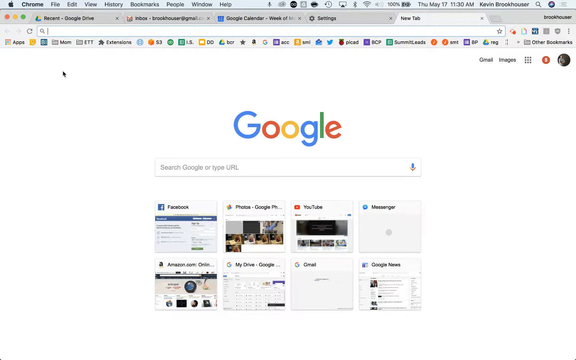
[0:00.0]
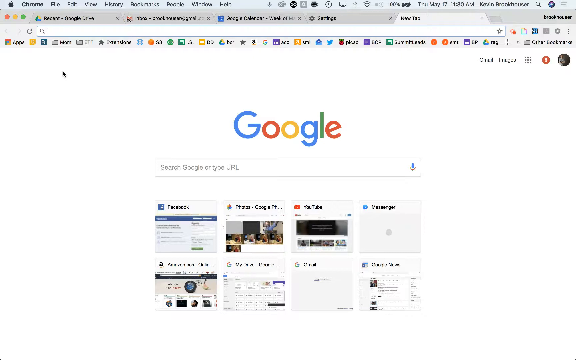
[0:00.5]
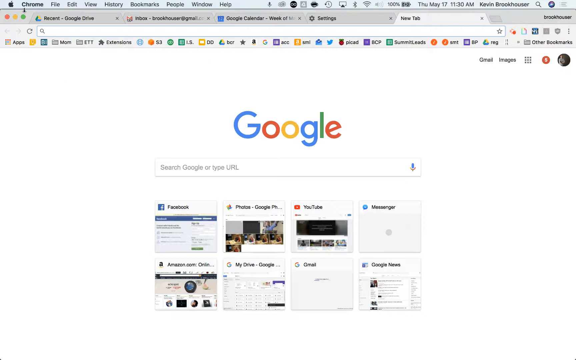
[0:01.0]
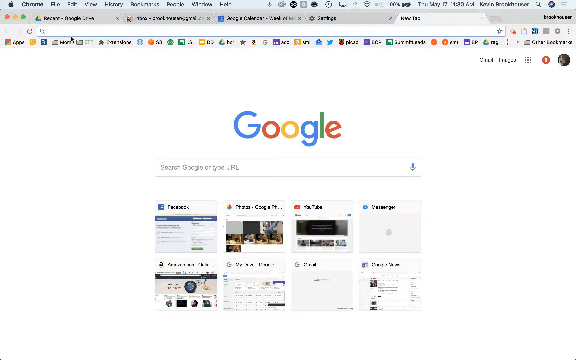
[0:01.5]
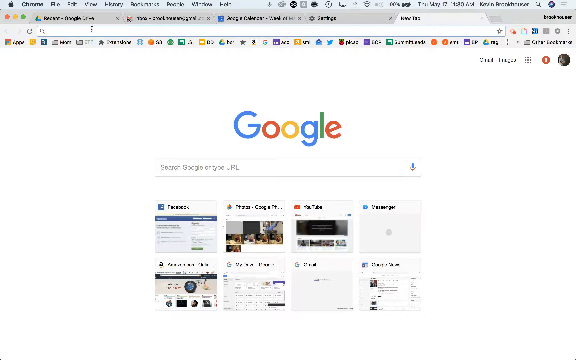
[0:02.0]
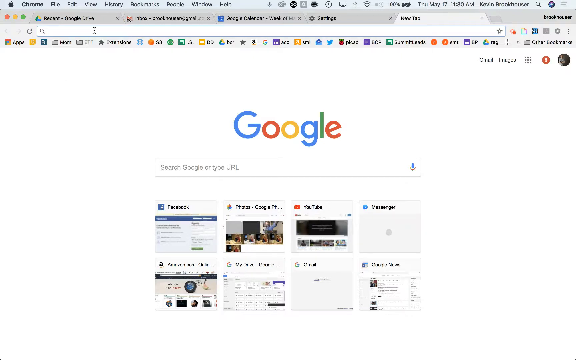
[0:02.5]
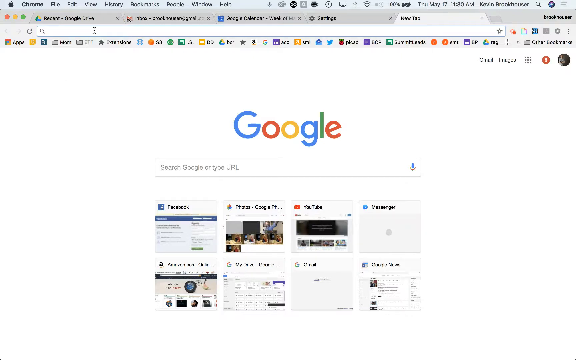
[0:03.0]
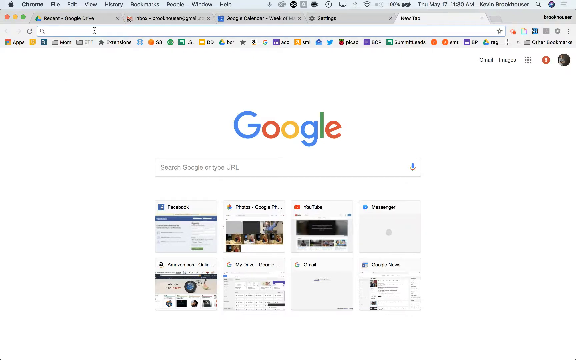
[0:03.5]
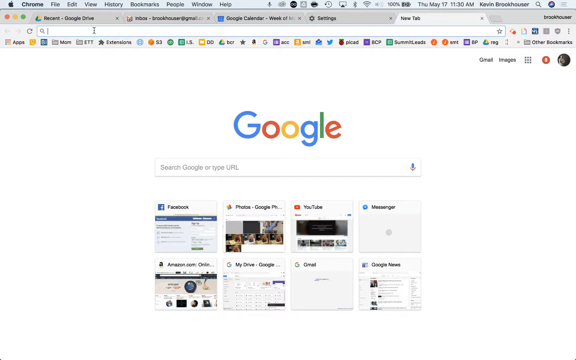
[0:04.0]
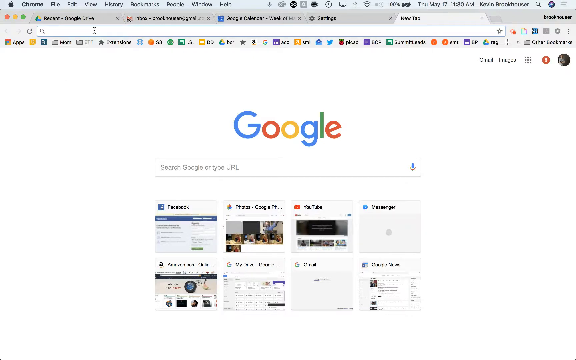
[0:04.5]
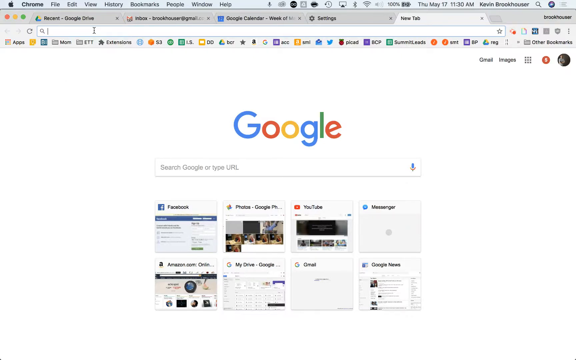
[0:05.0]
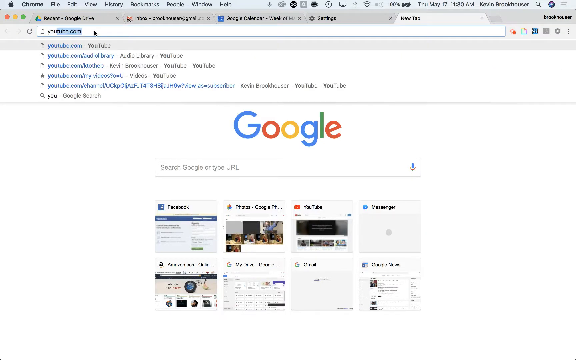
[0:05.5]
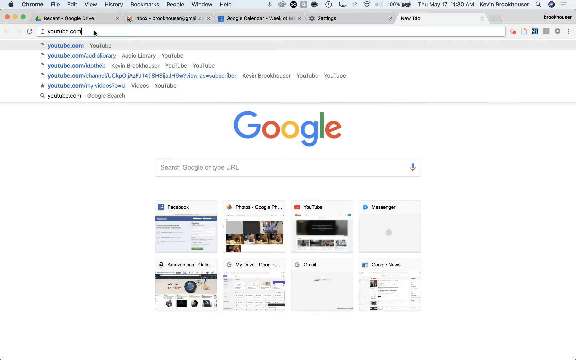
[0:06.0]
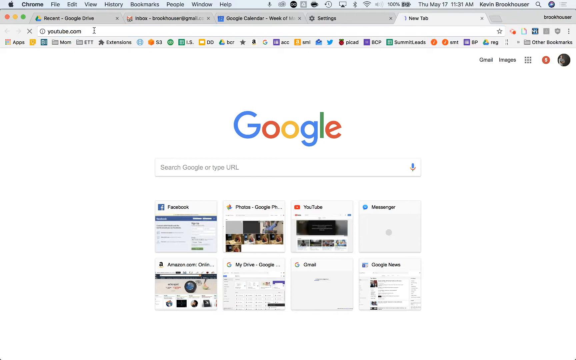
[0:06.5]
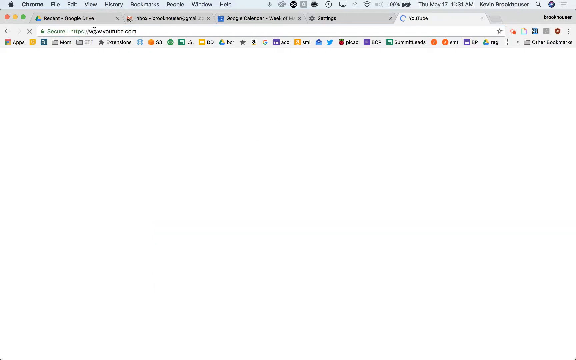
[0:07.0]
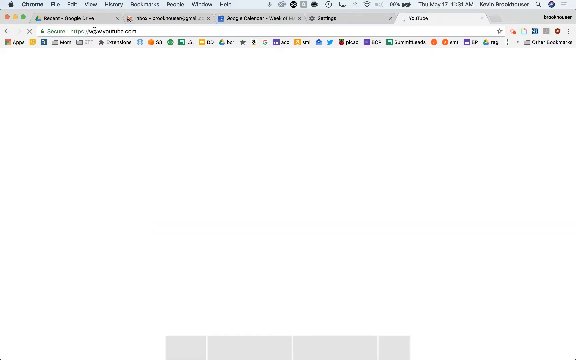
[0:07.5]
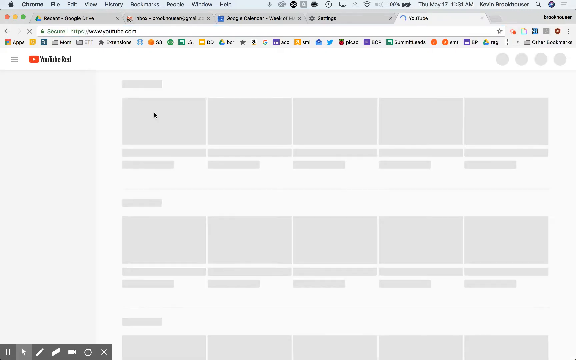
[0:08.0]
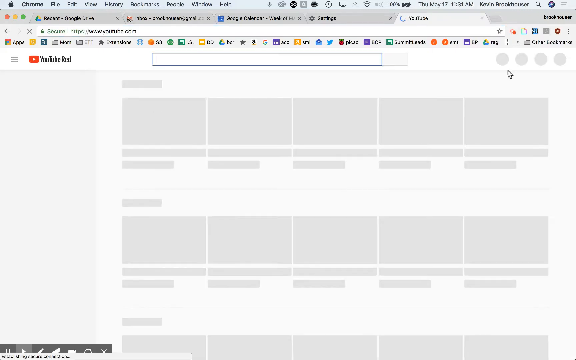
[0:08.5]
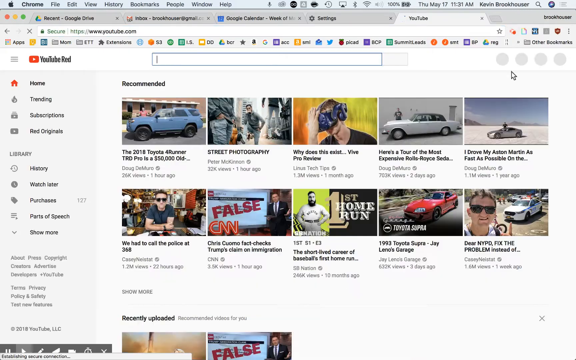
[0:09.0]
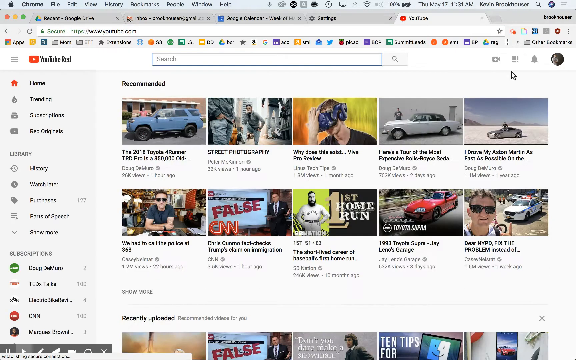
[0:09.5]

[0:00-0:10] A web browser, Chrome, is open on a gray MacBook, and YouTube.com is looked up. The Google logo is written in multiple colors: blue, red, orange, blue, yellow, green, and red. There are five tabs open and many bookmarks and extensions. Someone is logged in, with a picture in the corner. When YouTube is typed in, the browser goes to YouTube, which is YouTube Red, and the user's YouTube history is visible. There are 10 videos on the screen, and the sidebar is gray.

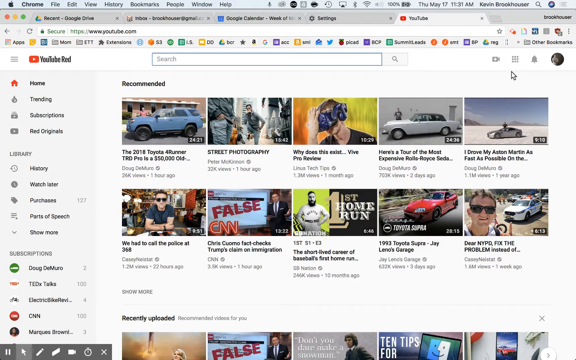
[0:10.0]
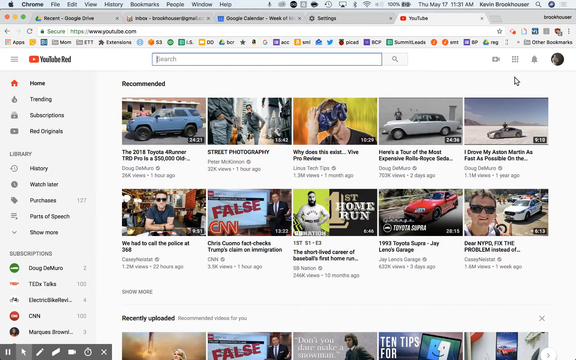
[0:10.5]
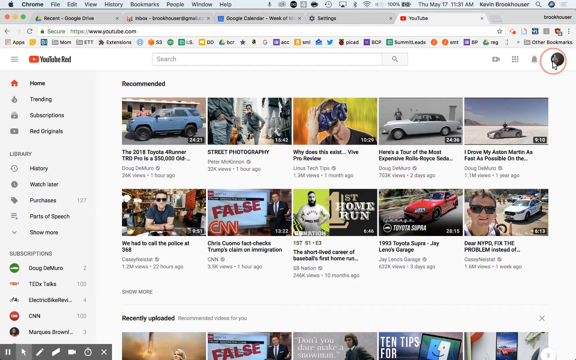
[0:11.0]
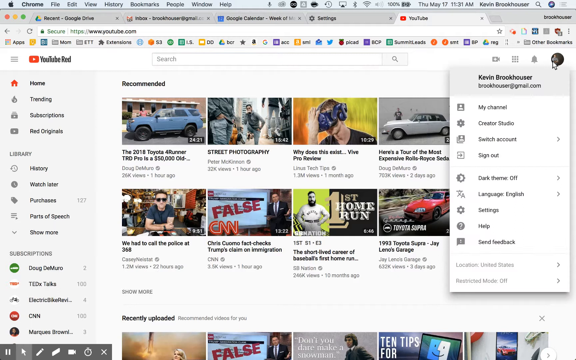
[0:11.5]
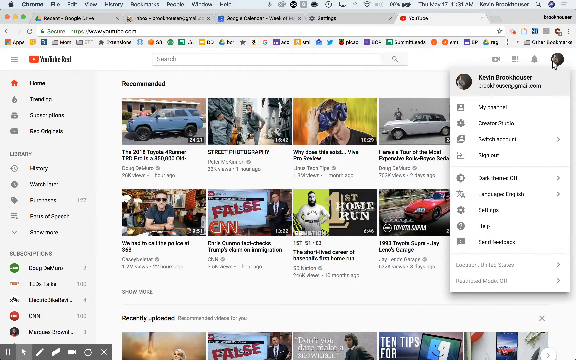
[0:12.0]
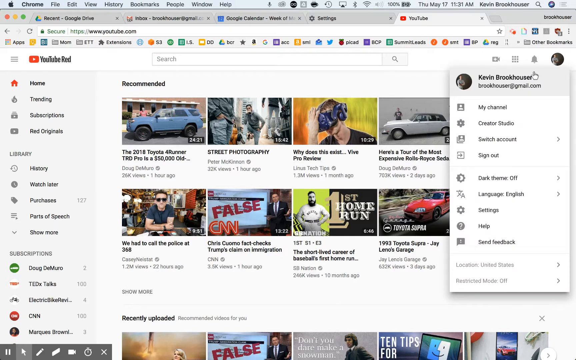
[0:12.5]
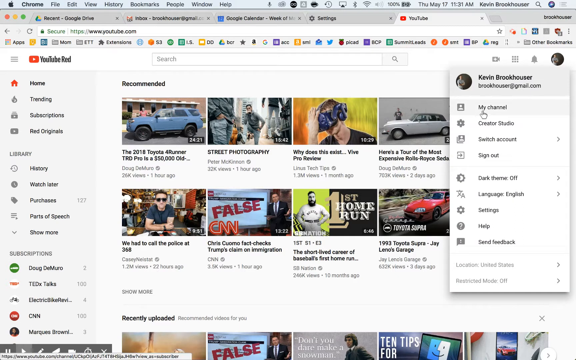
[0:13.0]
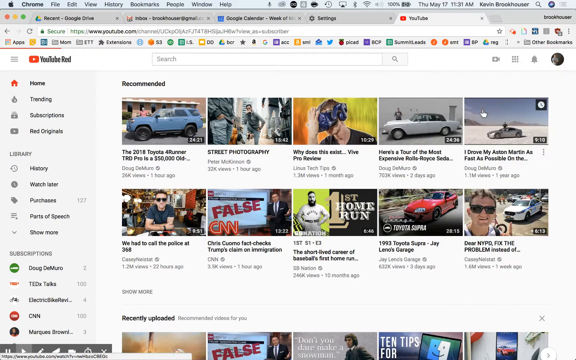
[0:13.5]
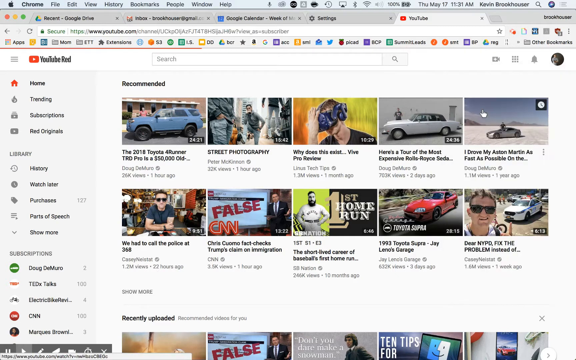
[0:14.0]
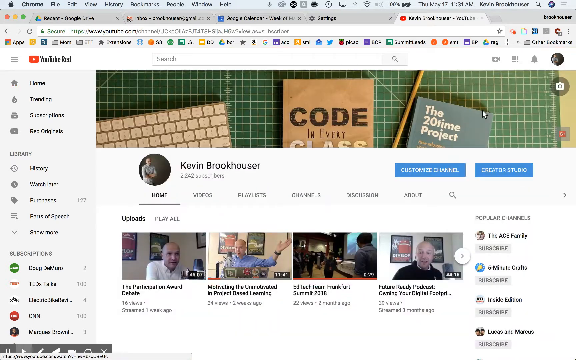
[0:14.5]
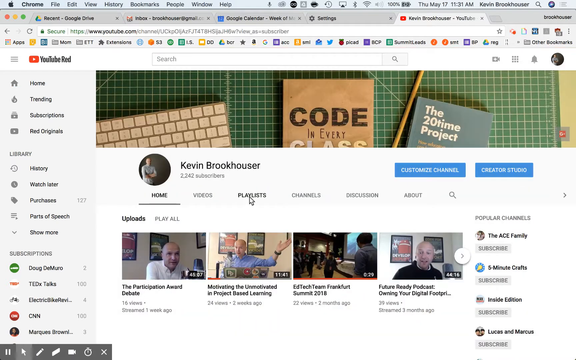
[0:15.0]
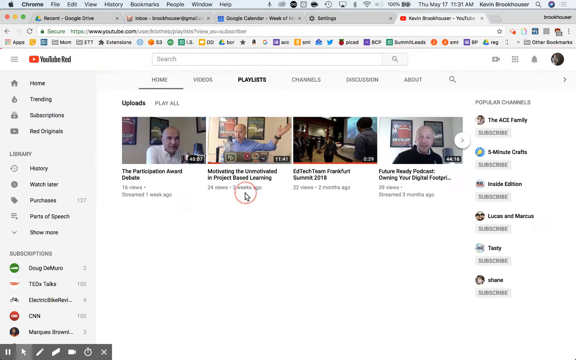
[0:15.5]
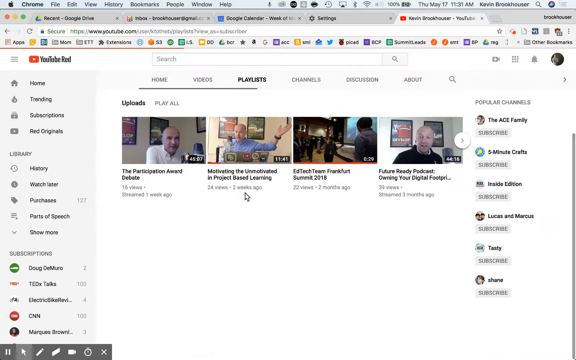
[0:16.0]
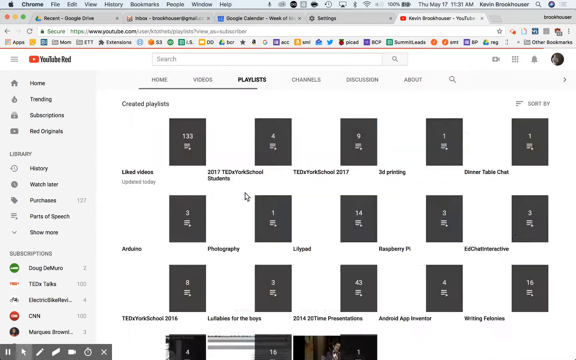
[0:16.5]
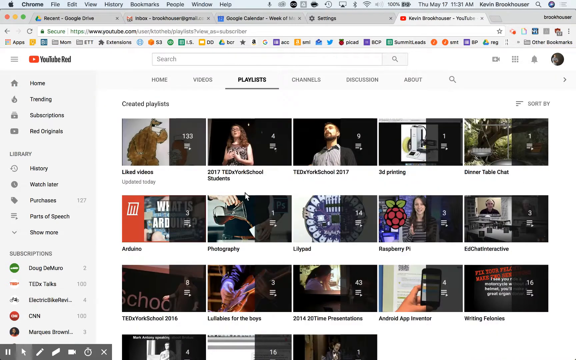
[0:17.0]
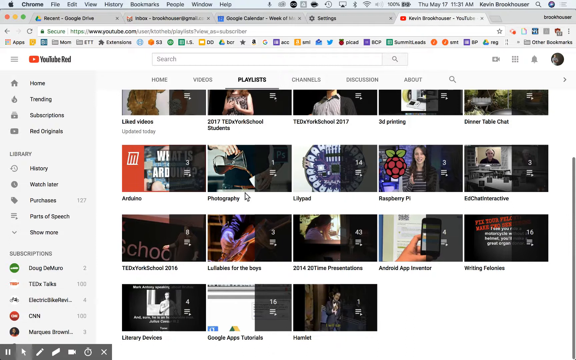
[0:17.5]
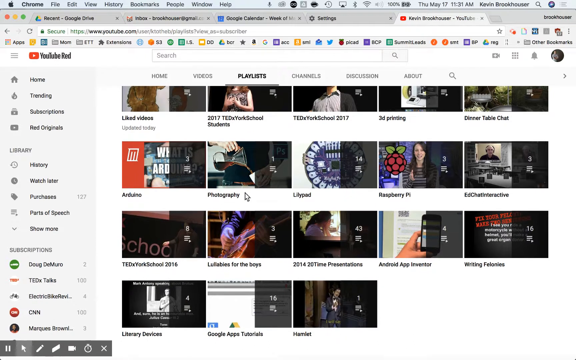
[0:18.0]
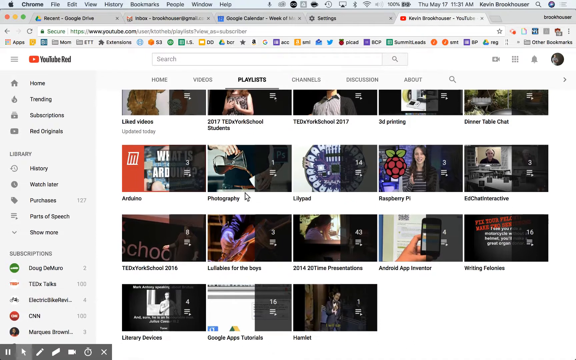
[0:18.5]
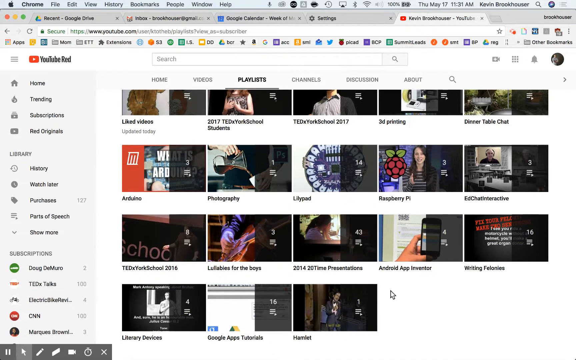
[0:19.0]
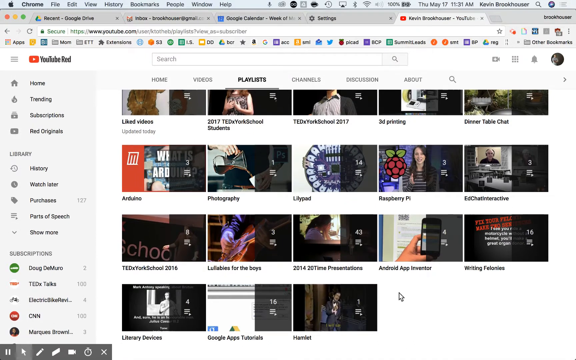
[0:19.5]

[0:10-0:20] On YouTube Red, 10 videos are visible. He clicks on his username, Kevin Brookhauser. His channel has four videos; one has been viewed and has a red marker under it. He goes to his playlists, and there are 19 playlists of videos with different names. The banner of his home screen shows a keyboard, a book with the word "code" on it, and another book in blue with the words "The 20time Project". The background of the banner is green and white checkered.